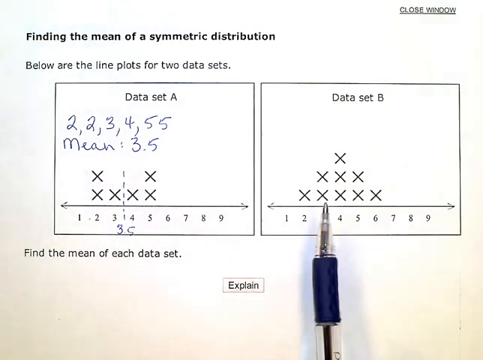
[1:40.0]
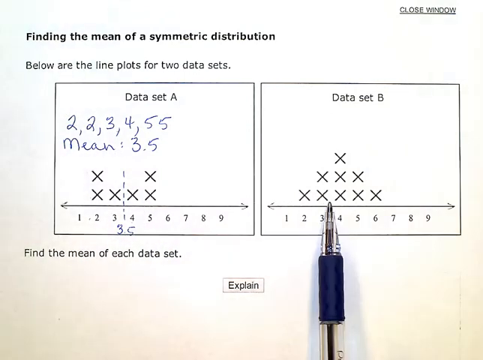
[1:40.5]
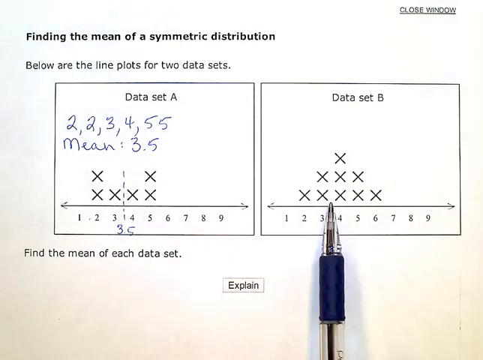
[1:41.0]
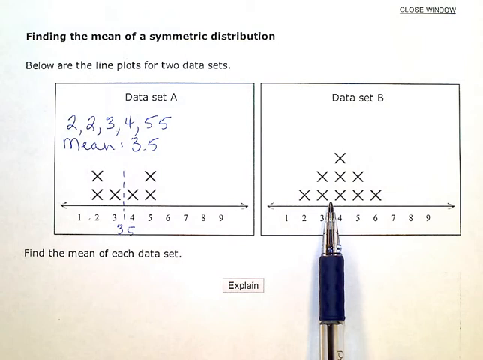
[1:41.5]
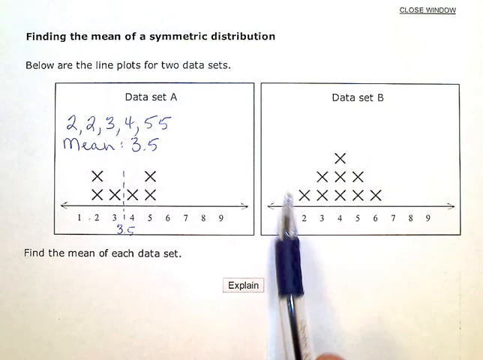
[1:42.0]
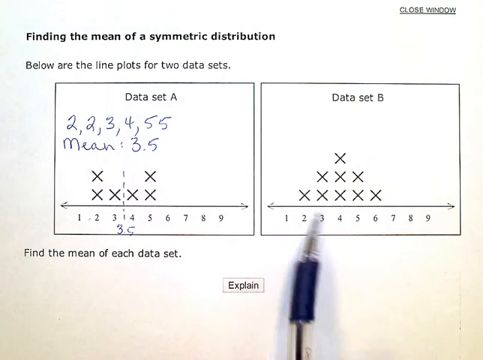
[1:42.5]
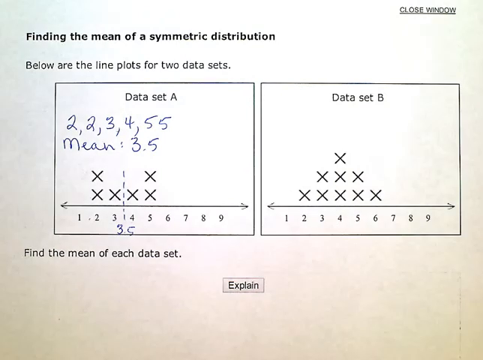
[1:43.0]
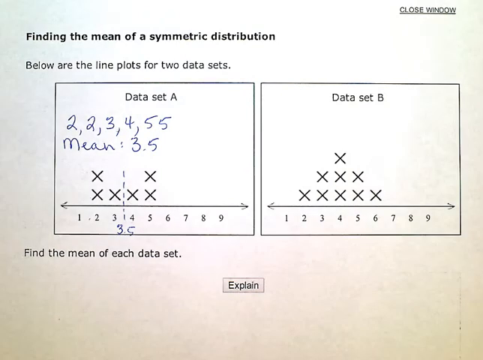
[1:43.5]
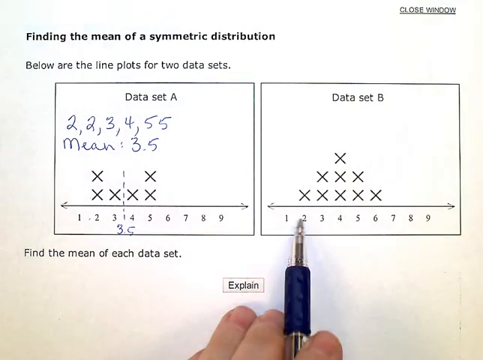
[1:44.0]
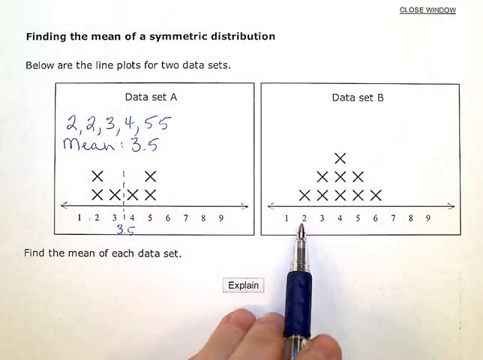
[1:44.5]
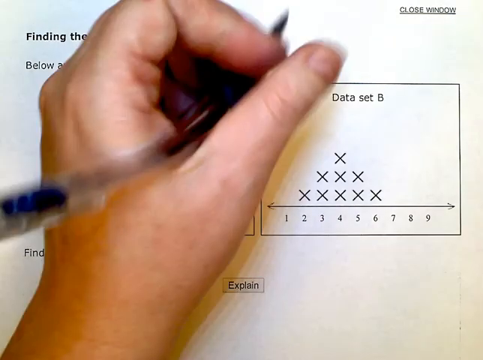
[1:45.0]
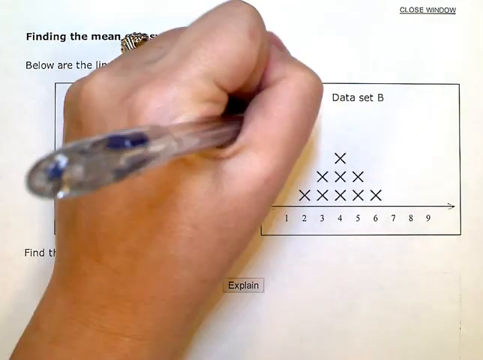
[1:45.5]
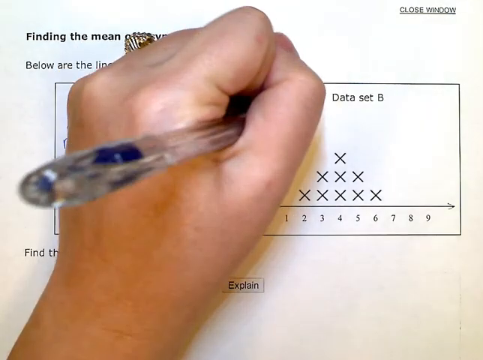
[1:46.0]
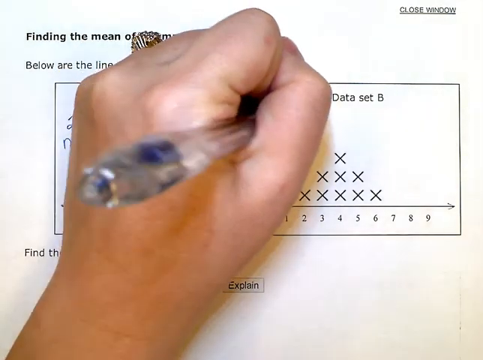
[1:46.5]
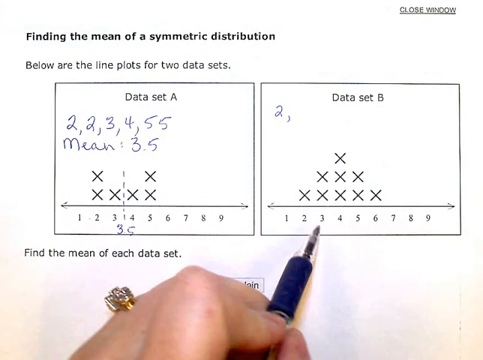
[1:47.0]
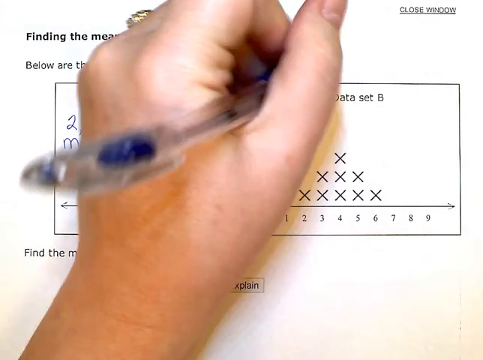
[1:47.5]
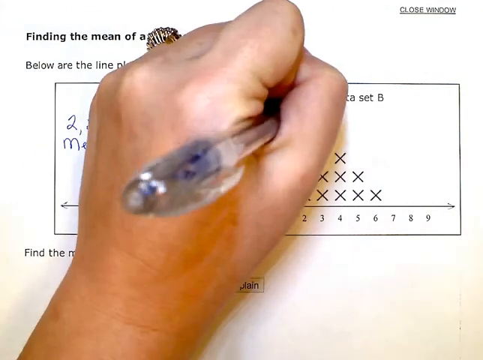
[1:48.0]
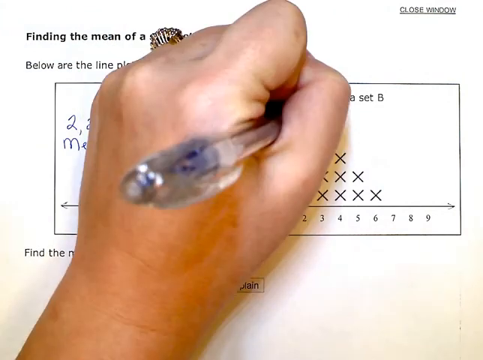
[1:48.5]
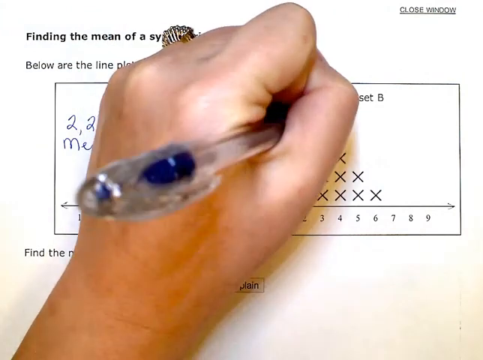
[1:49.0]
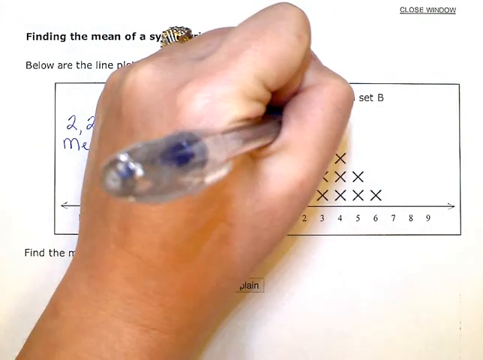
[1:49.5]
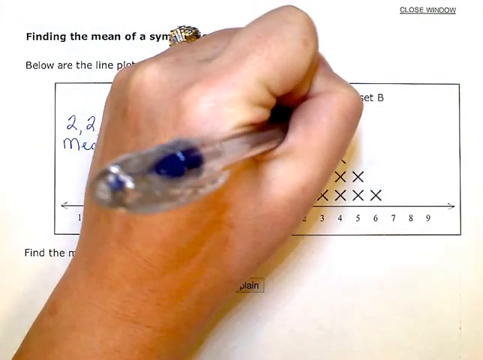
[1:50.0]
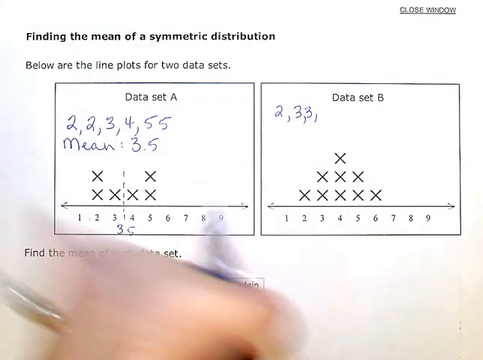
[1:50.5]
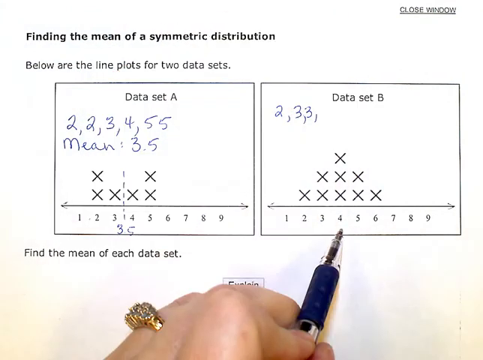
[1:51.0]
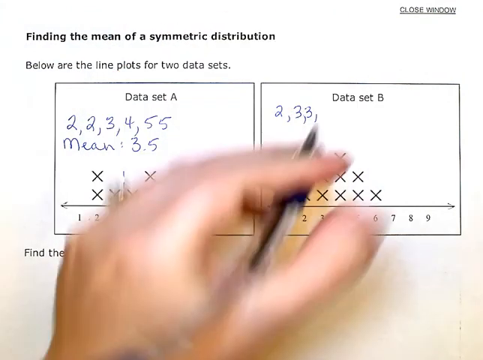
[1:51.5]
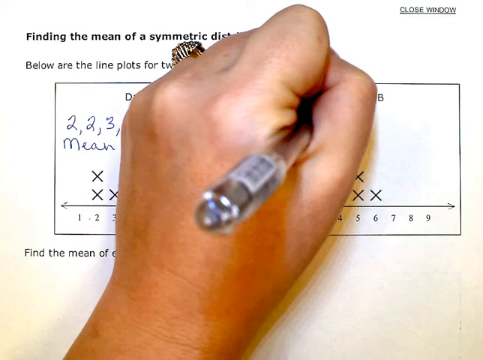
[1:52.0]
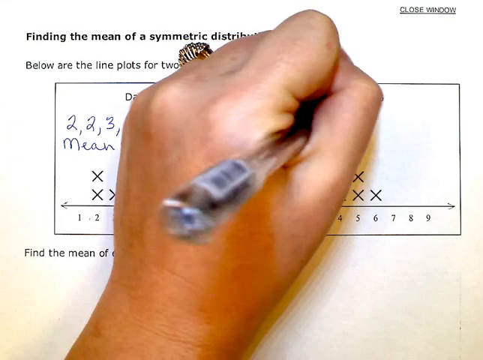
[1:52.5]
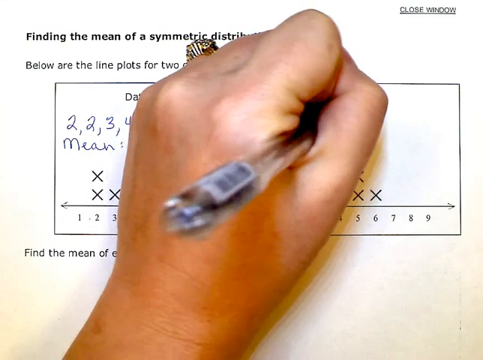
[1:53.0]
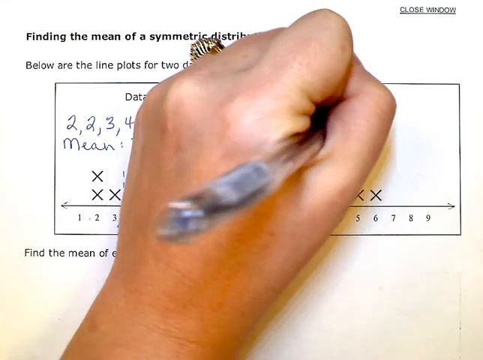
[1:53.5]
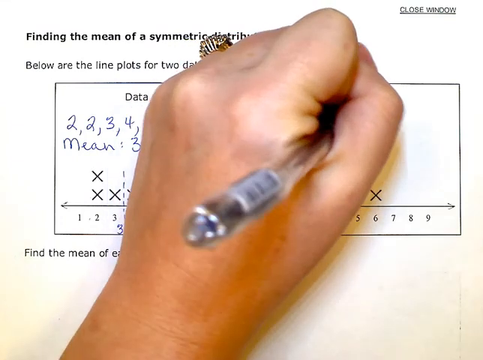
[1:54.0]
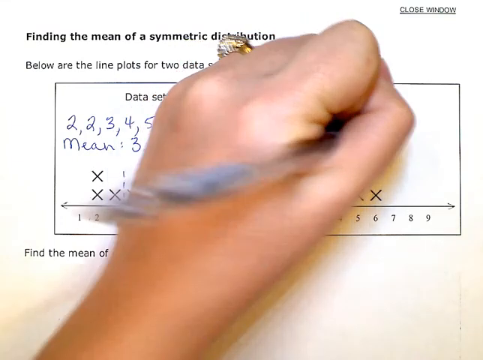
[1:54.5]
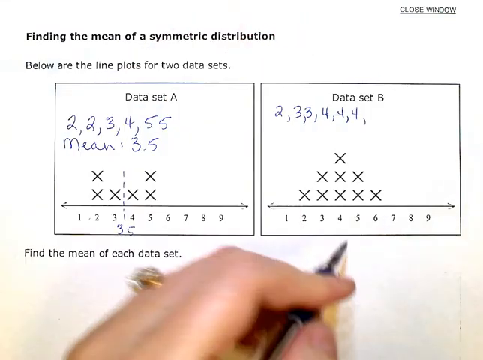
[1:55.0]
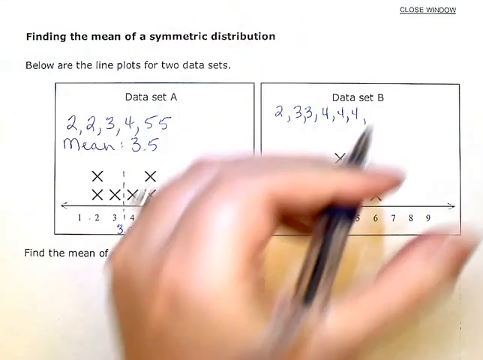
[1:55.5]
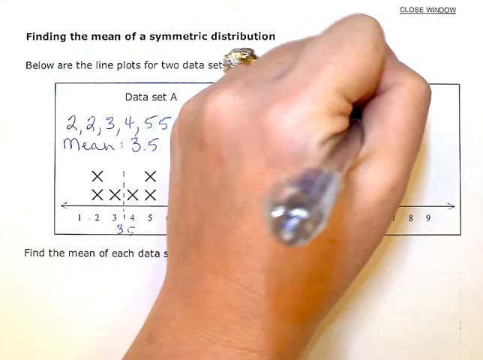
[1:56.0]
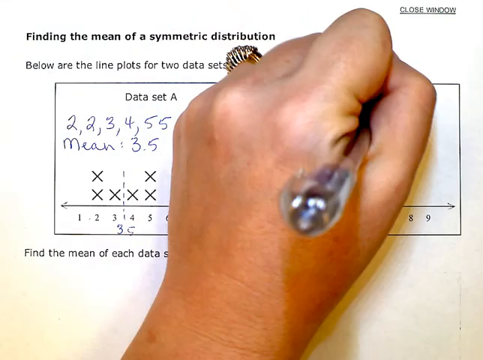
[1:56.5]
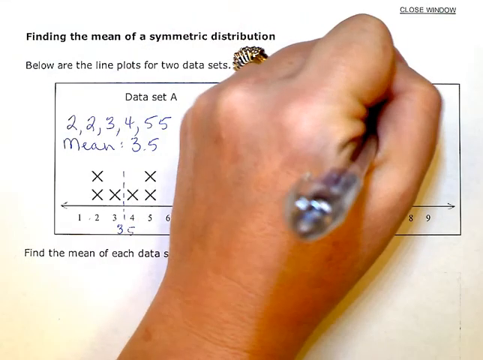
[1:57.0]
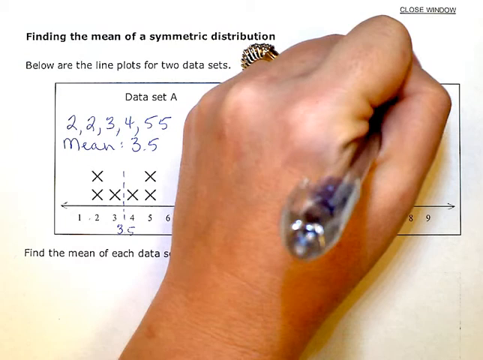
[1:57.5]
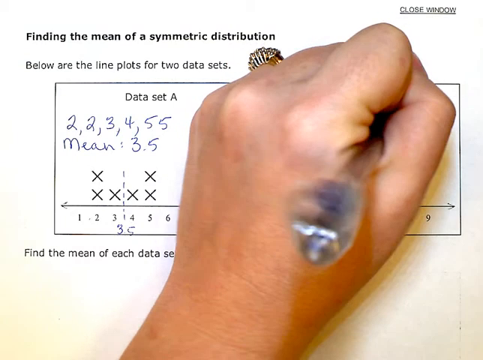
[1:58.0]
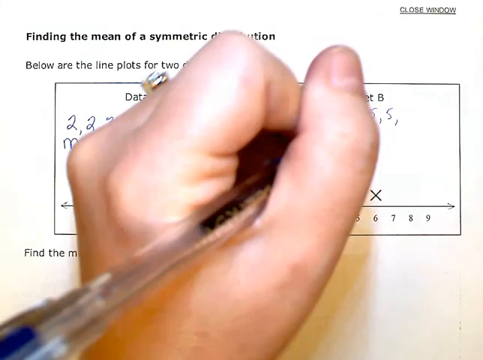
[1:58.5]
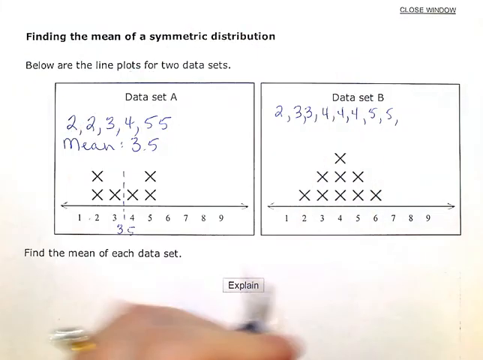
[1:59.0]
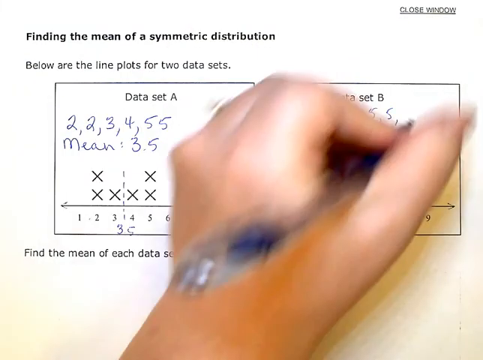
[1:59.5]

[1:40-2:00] The pen rests on data set B between the 3 and the 4, and a little of its shadow is visible. Part of the pen's body is clear, there is a blue foam-like grip around it, and the ink shows in a small clear tube, so the ink level is visible. She picks the pen up and her hand comes into view. The footage has a slight delay, causing a little lag as she moves the pen. Her index finger is curled over the pen, resting on the edge of her thumb, as she writes. She writes 2, 3, 3 with commas between them, then writes more, so the data set reads 2, 3, 3, 4, 4, 4, 5, 5. As soon as she writes it, she pulls her hand away. There is a comma after the last number, apparently an error since no number follows it yet.